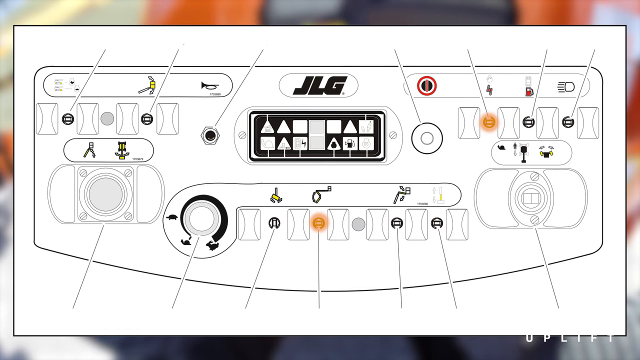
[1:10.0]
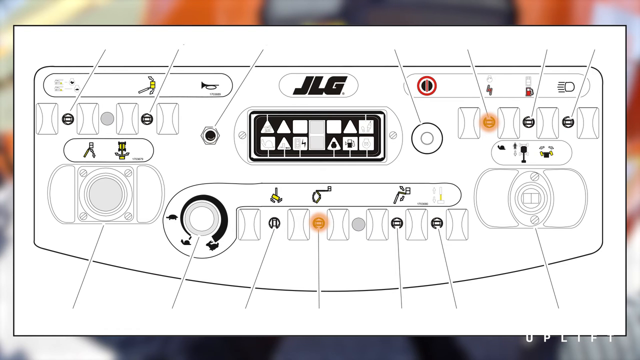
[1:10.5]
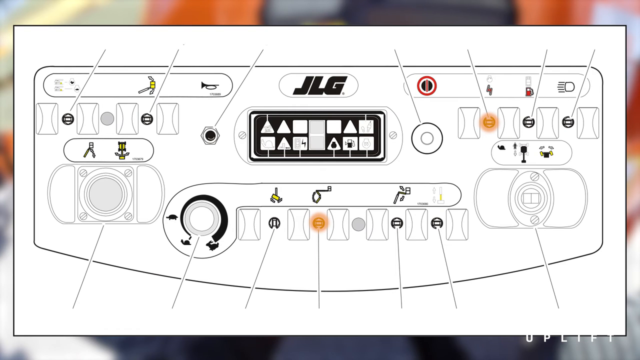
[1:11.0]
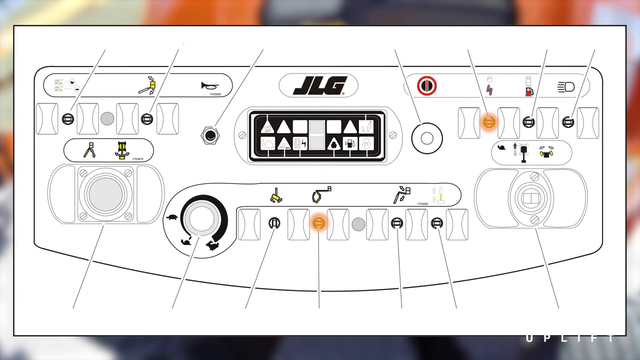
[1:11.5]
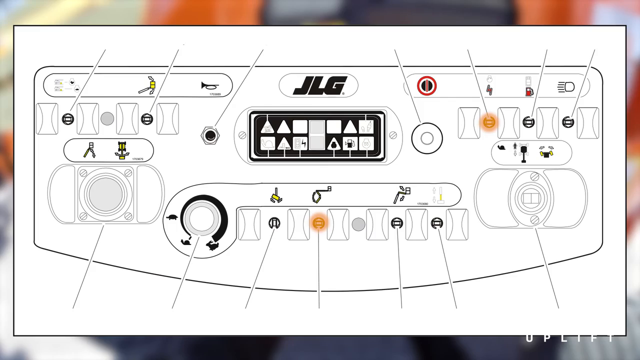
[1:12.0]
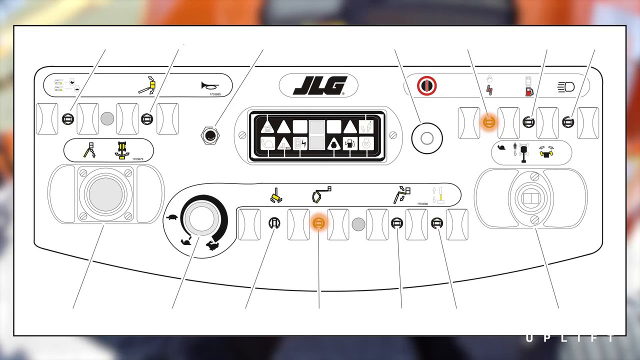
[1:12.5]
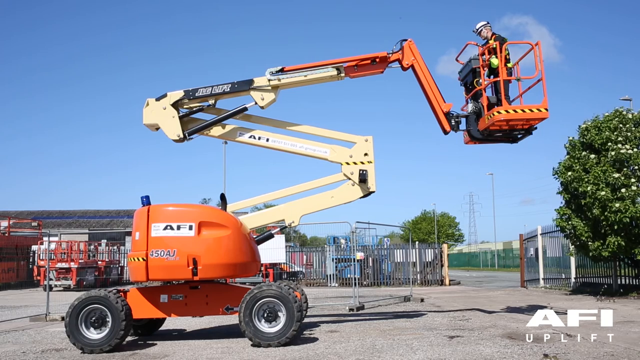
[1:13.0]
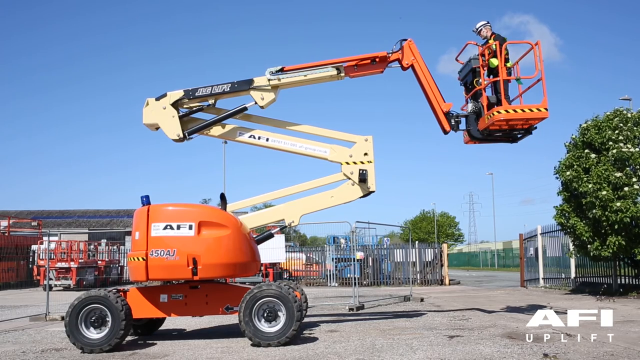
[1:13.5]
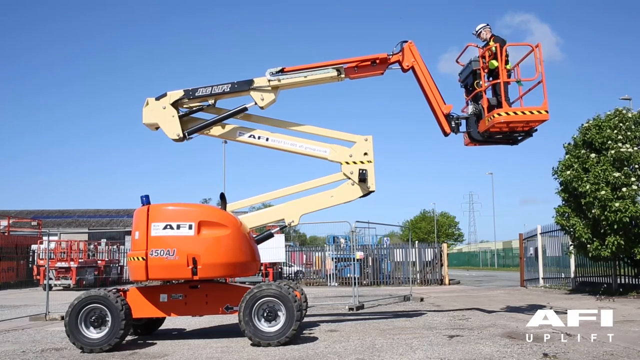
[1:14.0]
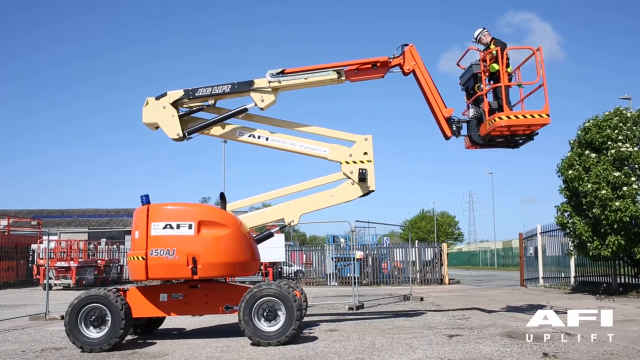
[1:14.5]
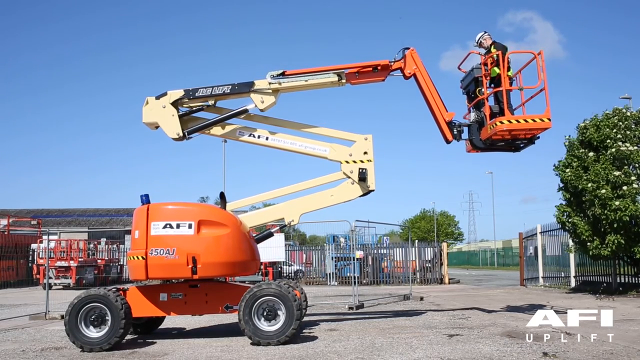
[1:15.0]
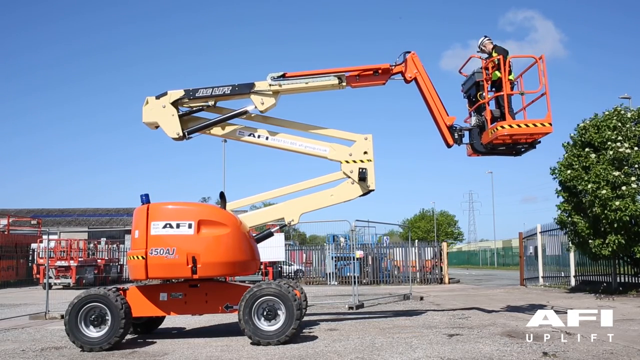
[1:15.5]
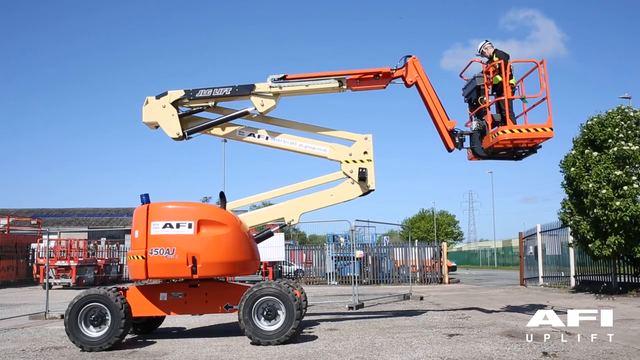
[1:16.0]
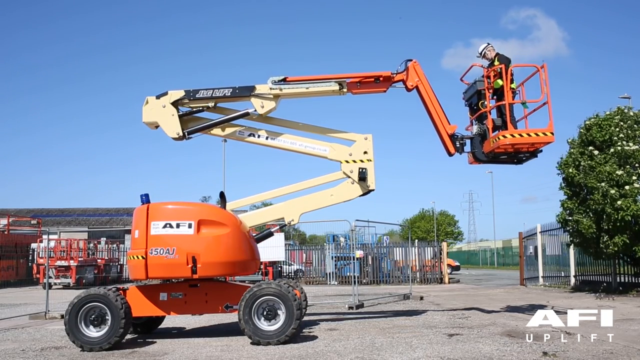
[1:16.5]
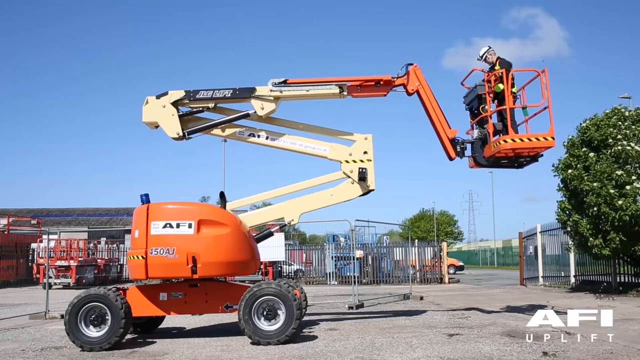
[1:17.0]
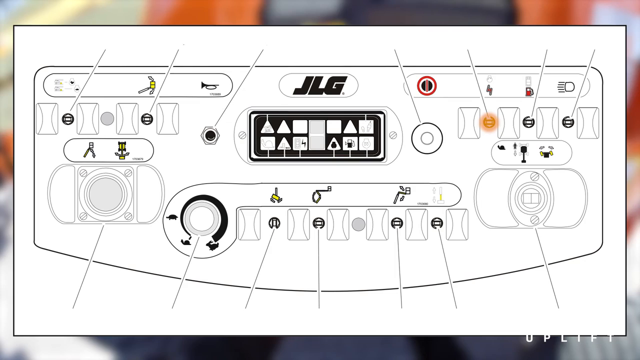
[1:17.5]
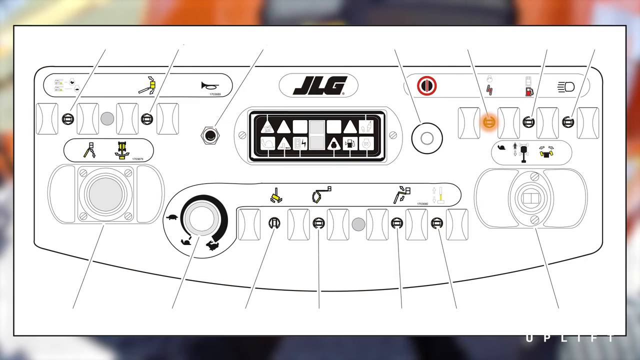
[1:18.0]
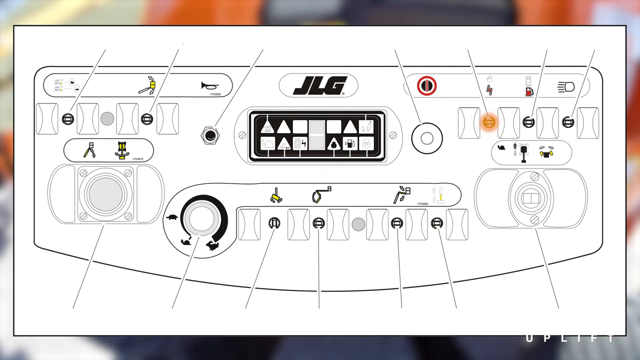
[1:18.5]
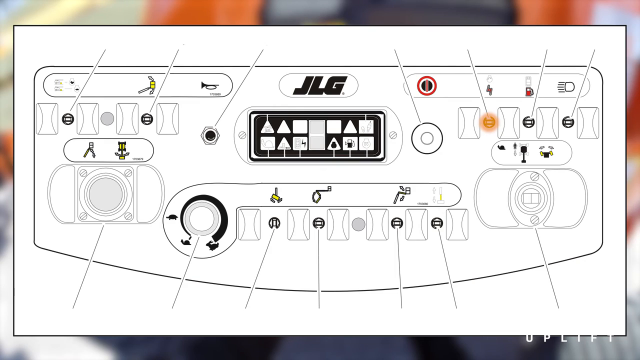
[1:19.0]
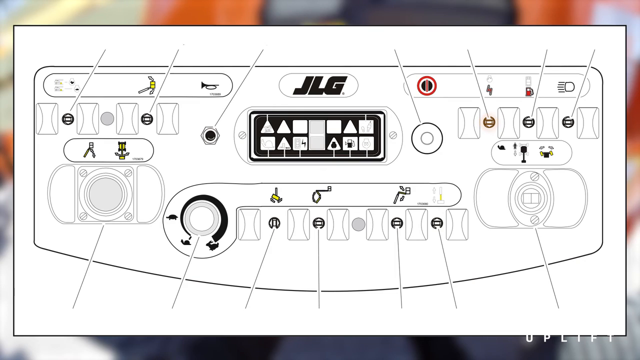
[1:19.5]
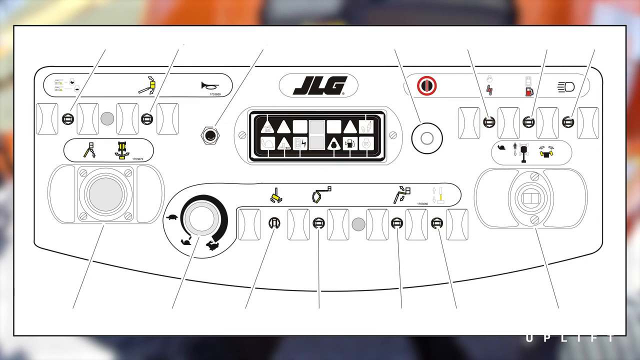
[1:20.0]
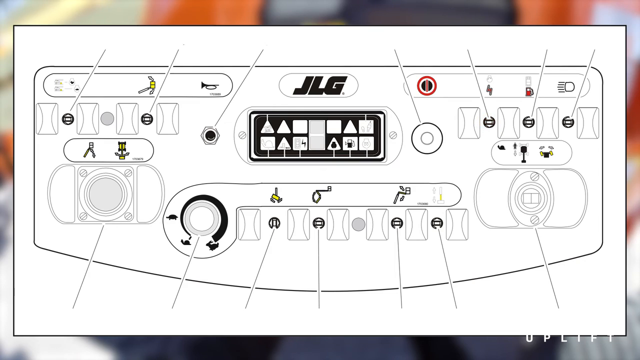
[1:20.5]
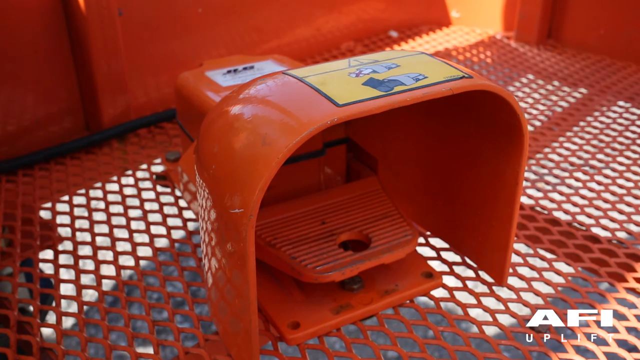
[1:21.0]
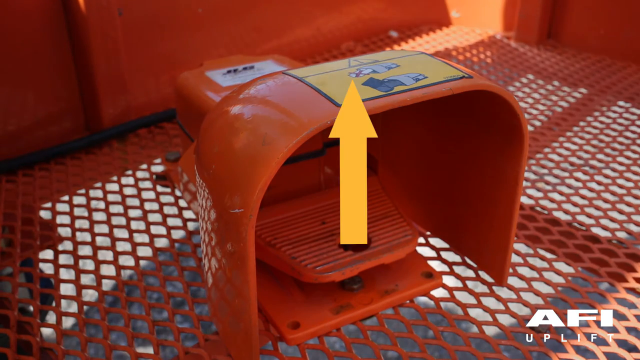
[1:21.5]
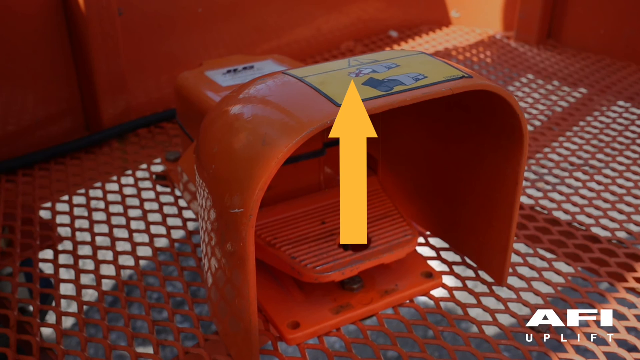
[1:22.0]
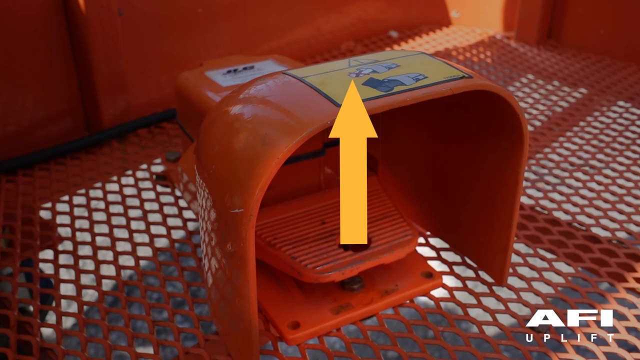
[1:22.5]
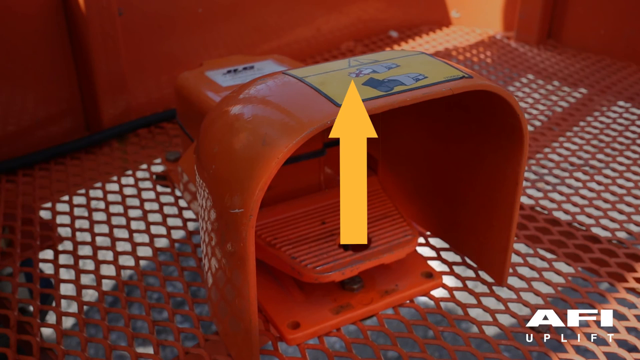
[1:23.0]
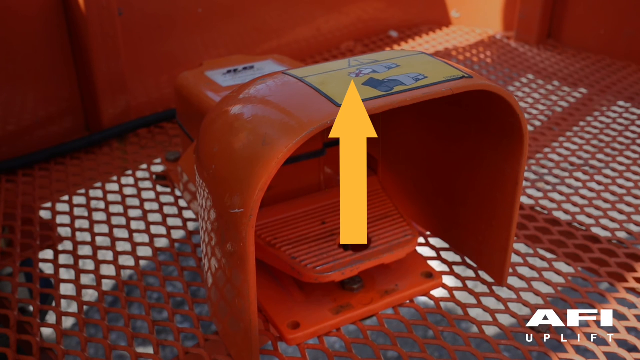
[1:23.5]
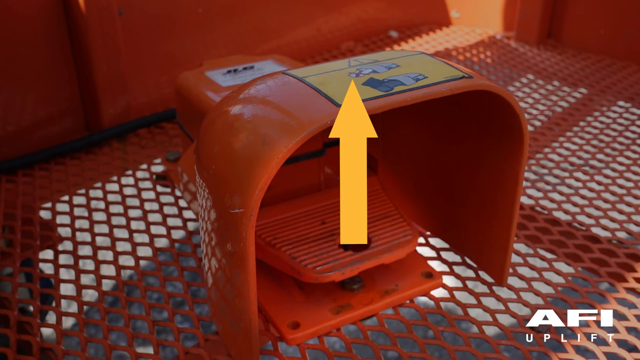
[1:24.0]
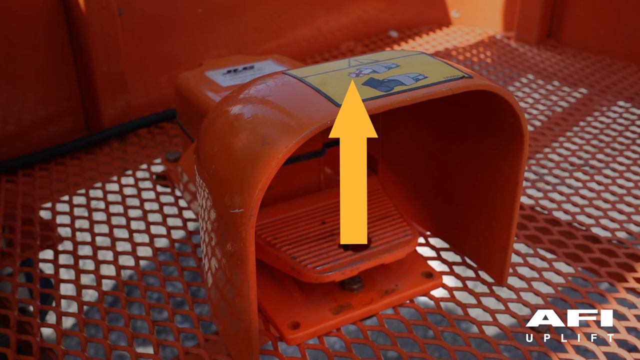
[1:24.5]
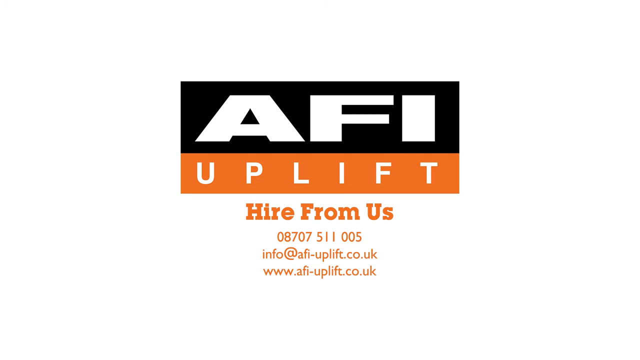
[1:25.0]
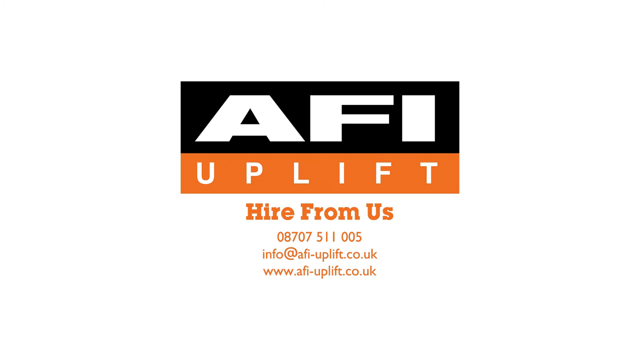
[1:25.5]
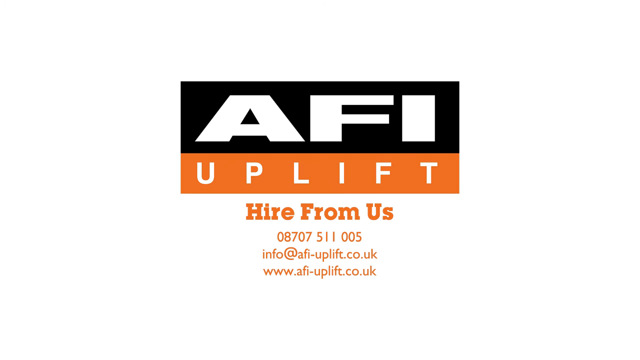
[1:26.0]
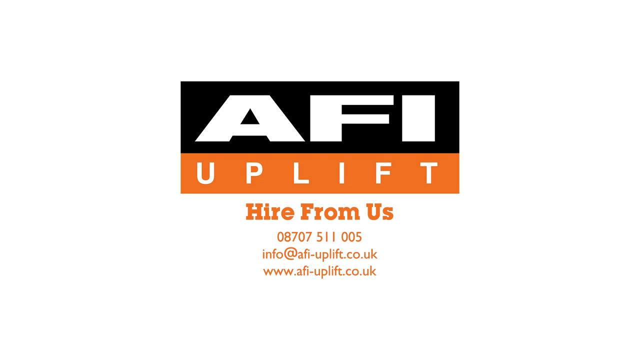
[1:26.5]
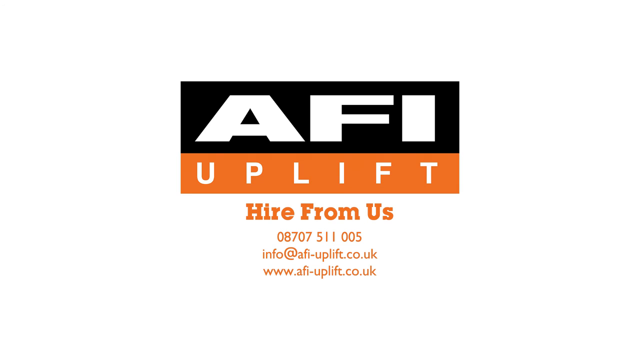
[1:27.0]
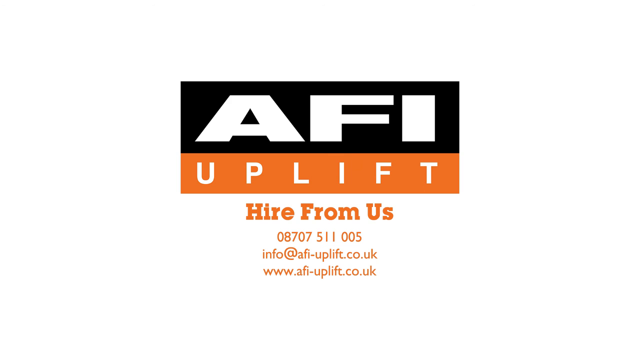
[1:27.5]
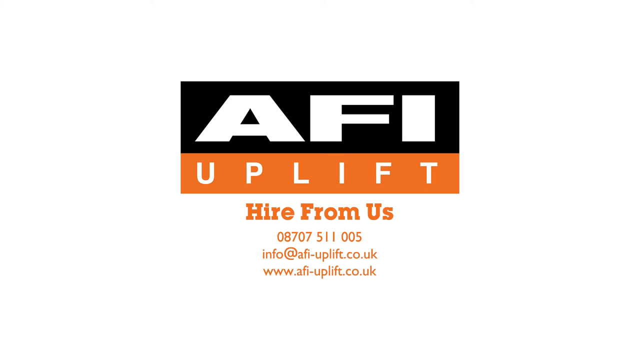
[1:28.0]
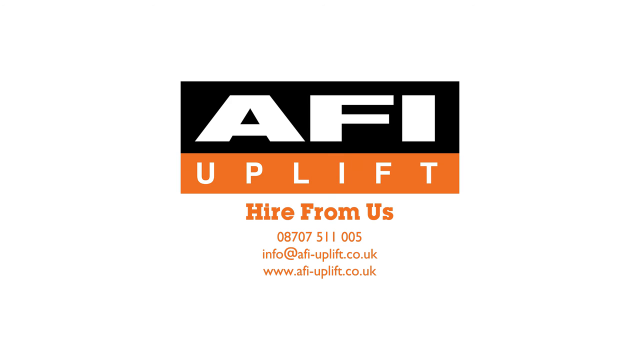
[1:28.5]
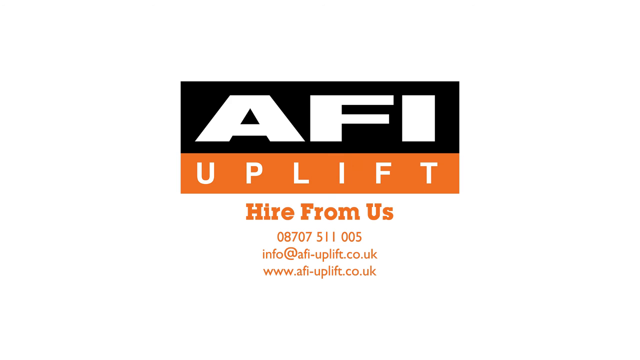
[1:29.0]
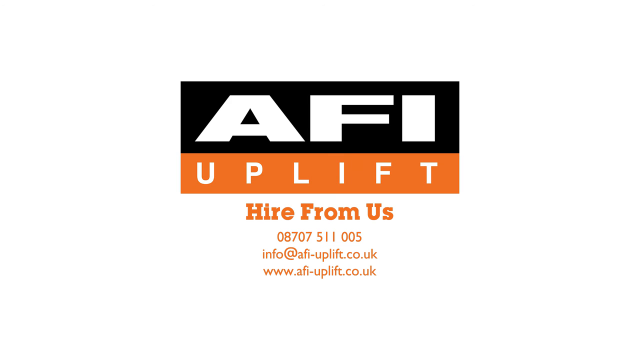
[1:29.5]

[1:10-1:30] A man is inside the cherry picker, operating it from the basket rather than the seat, and he seems to know exactly what he is doing. Apparently these devices can be rented, but only in the United Kingdom.